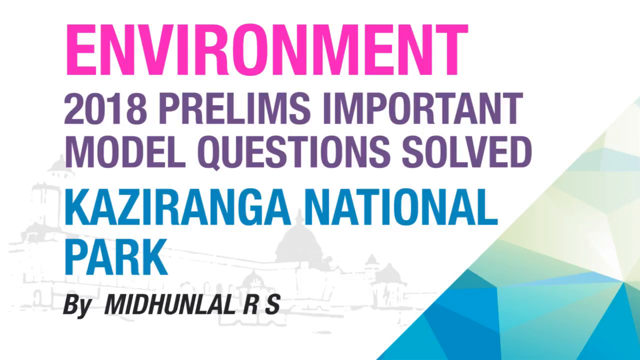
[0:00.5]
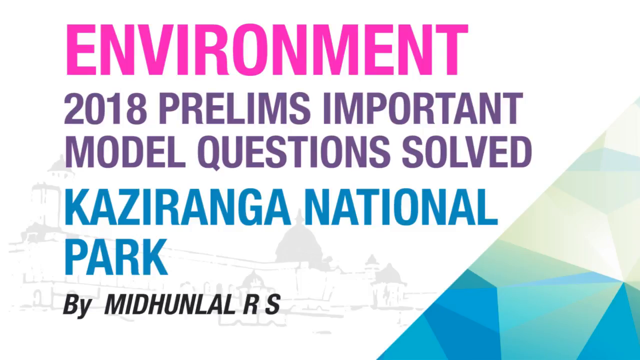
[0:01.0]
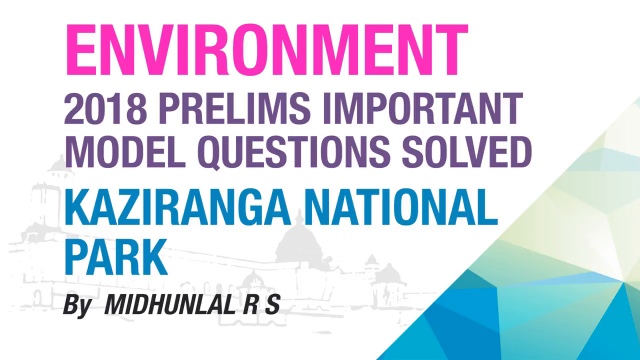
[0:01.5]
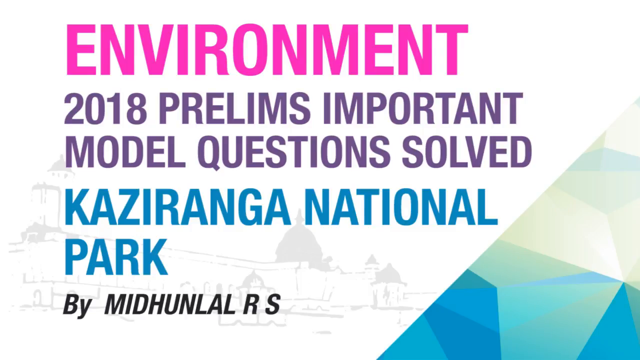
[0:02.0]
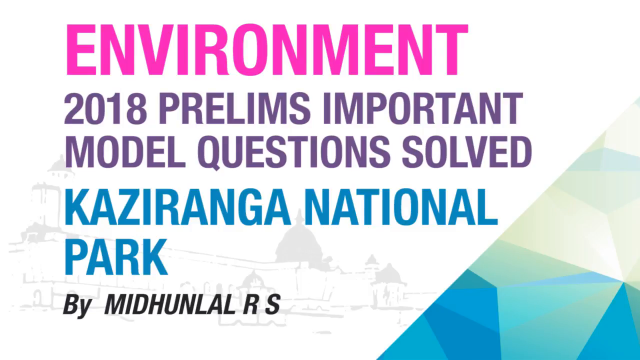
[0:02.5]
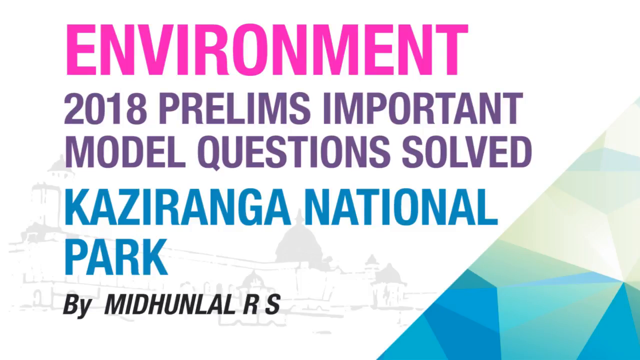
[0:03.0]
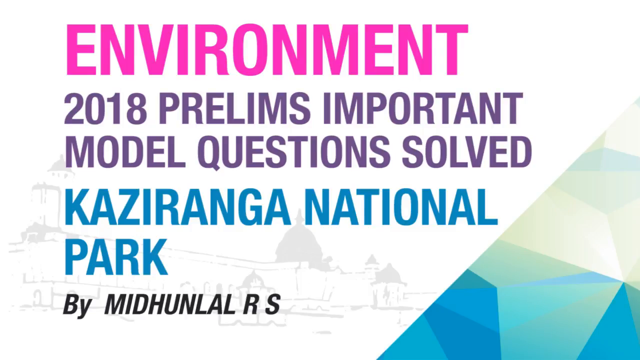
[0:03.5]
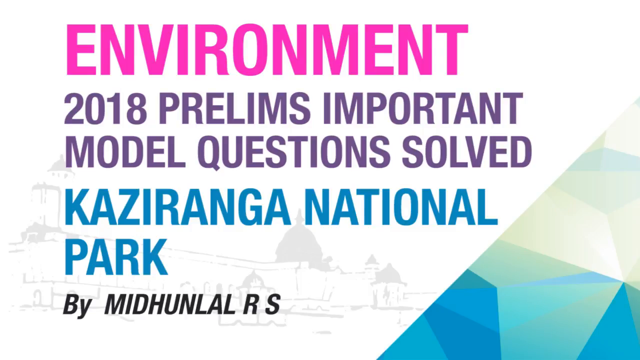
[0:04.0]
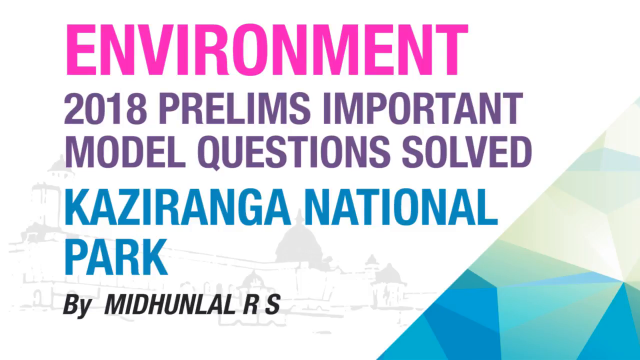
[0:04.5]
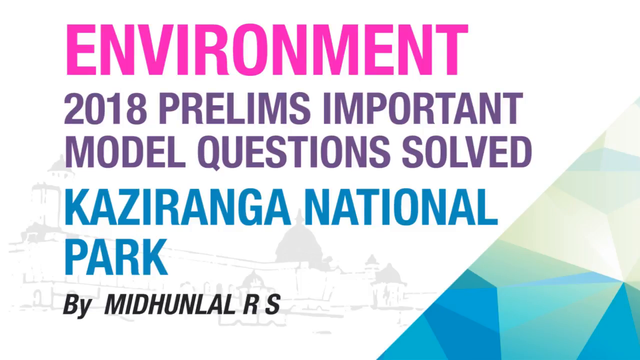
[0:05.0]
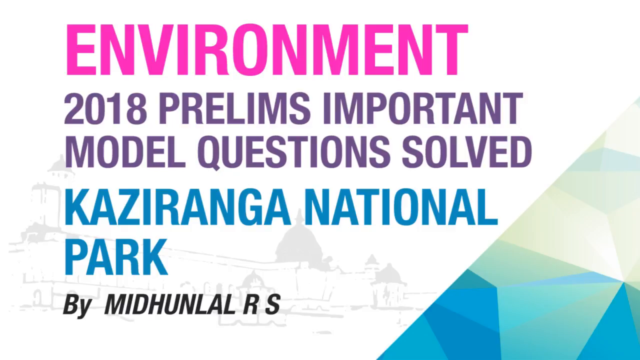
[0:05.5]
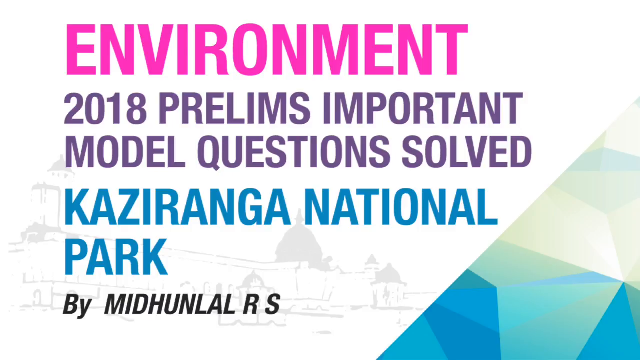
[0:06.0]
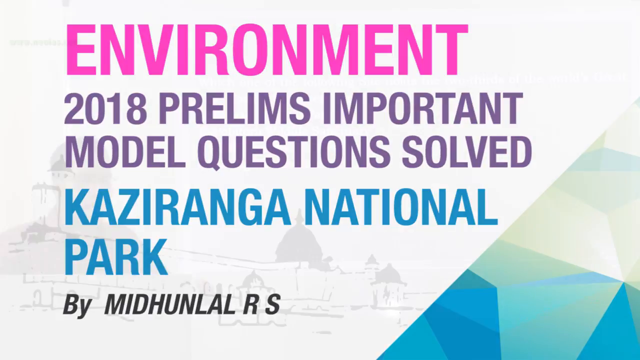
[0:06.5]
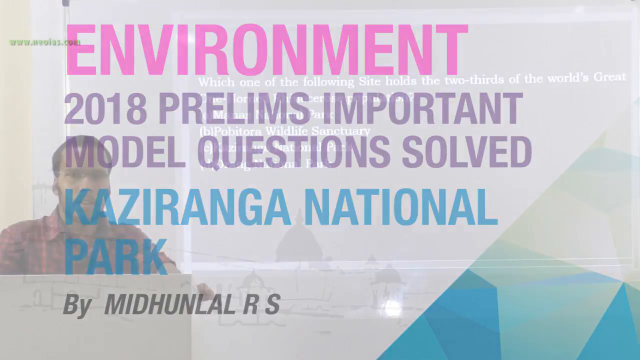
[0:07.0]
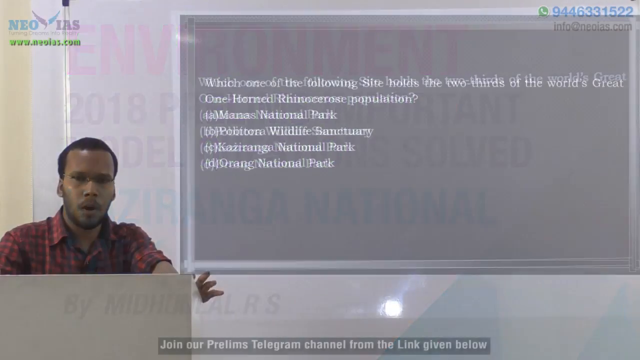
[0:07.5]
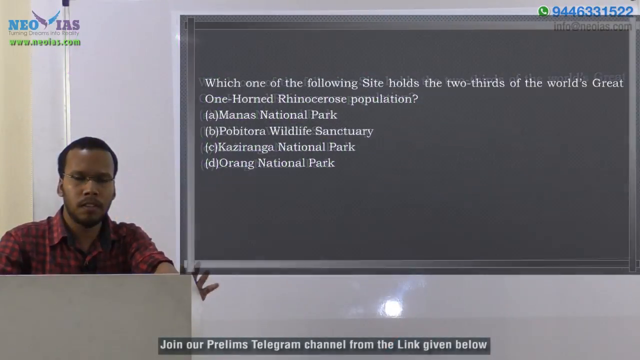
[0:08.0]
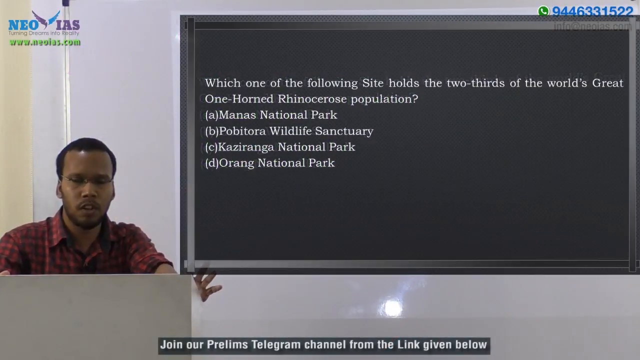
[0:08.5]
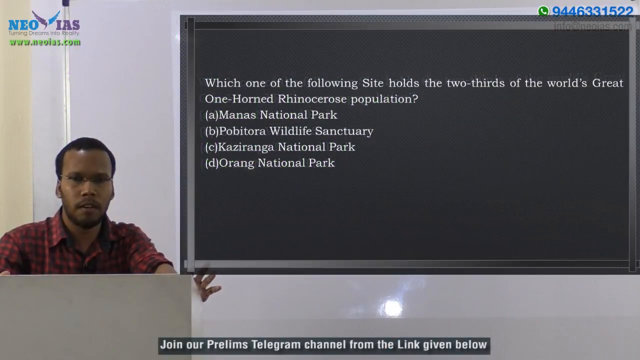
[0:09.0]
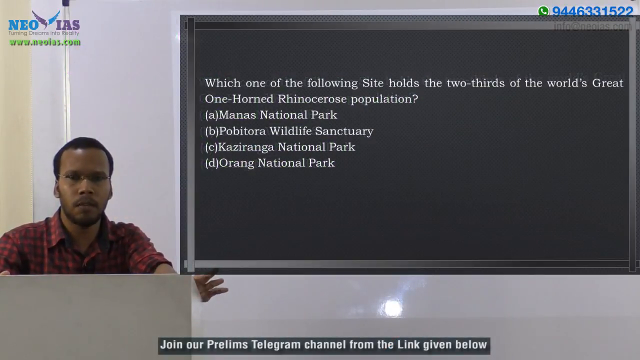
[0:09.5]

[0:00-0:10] The video opens with a pamphlet reading "Environment 2011 volumes, Important Model, Question Solved, Kaziranga National Park," apparently for something like a symposium or presentation. This fades away and a man in a t-shirt appears with a board. He is in front of a computer on the right side of the video, looking directly at the camera. On the left side is a board on which he is providing some information. In the top right corner of the board there is a WhatsApp number, and in the right corner there is a logo. The man starts talking, apparently about what is written on the board.